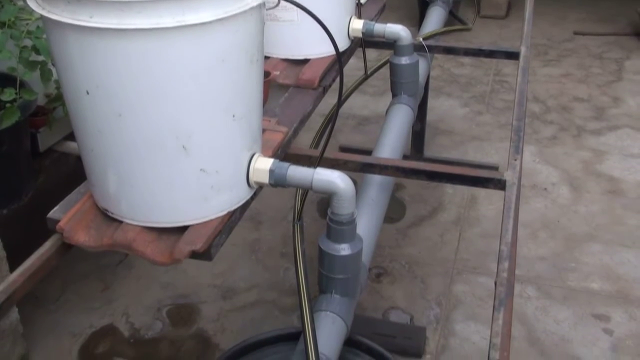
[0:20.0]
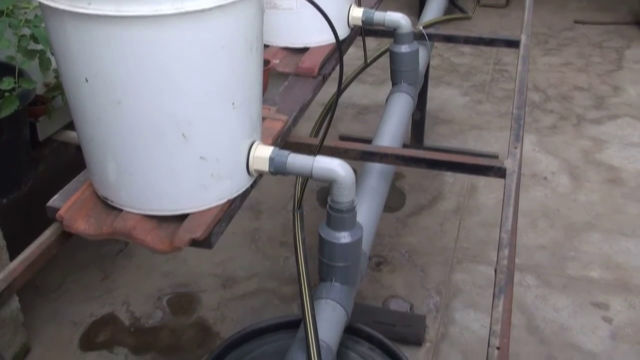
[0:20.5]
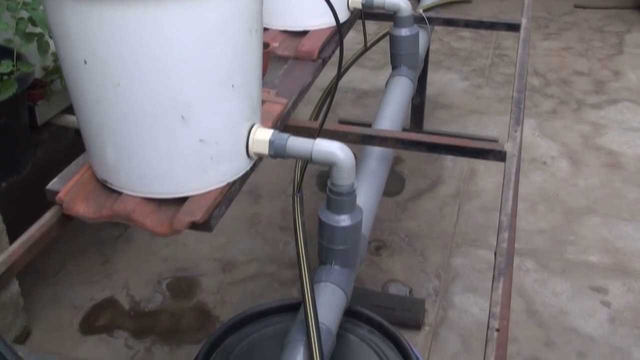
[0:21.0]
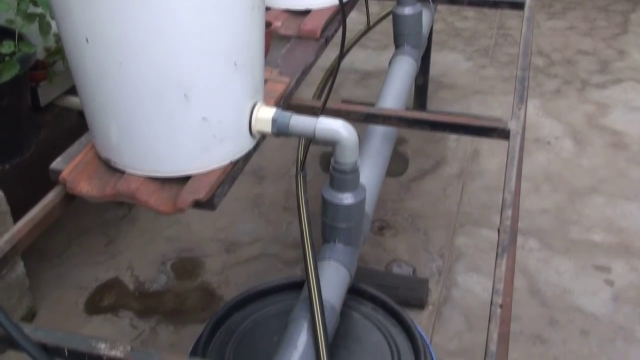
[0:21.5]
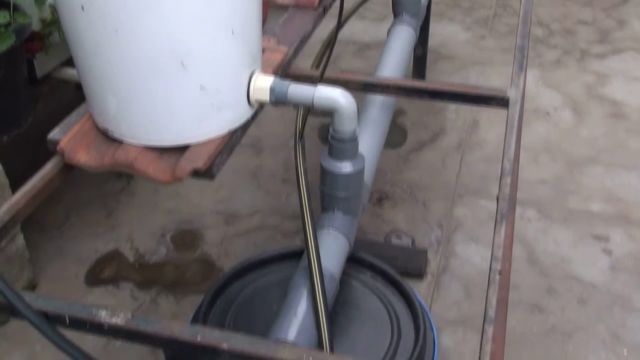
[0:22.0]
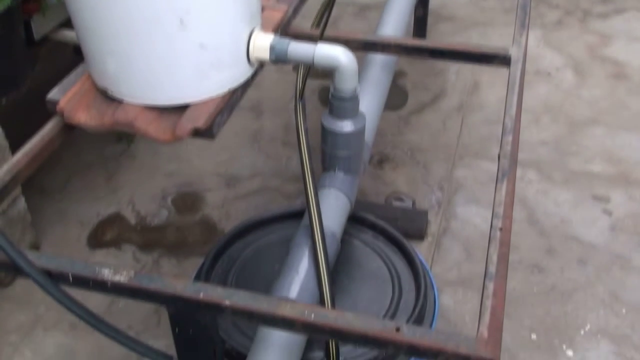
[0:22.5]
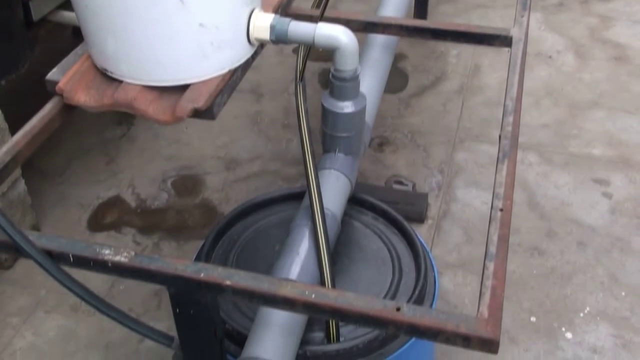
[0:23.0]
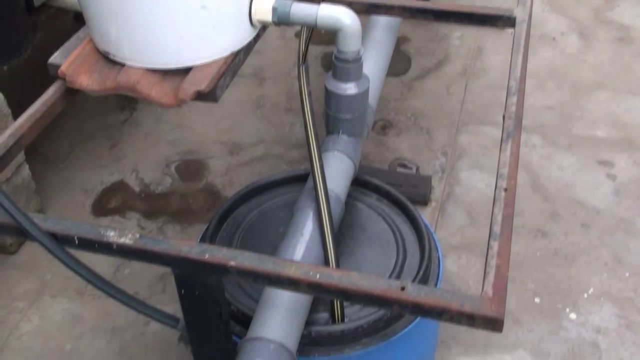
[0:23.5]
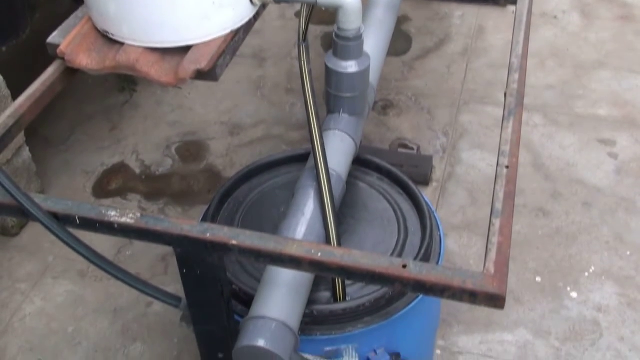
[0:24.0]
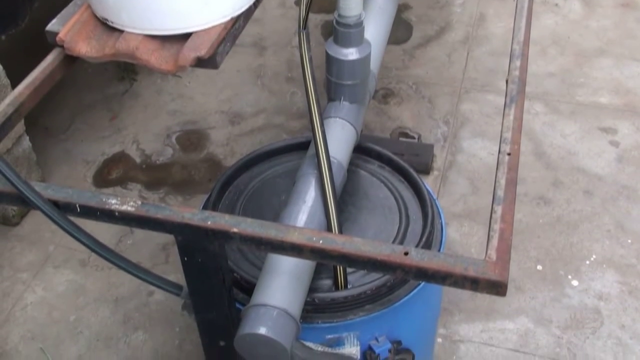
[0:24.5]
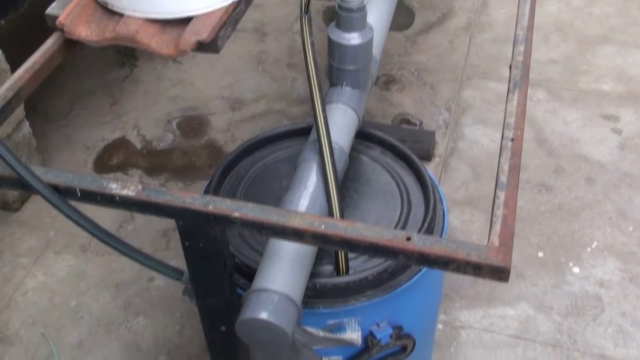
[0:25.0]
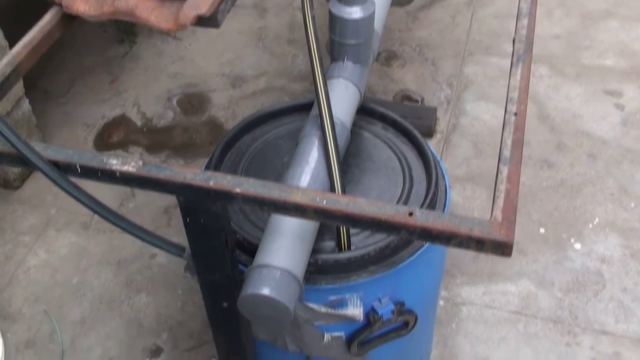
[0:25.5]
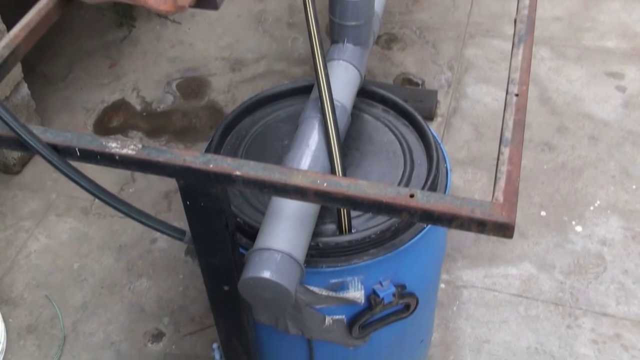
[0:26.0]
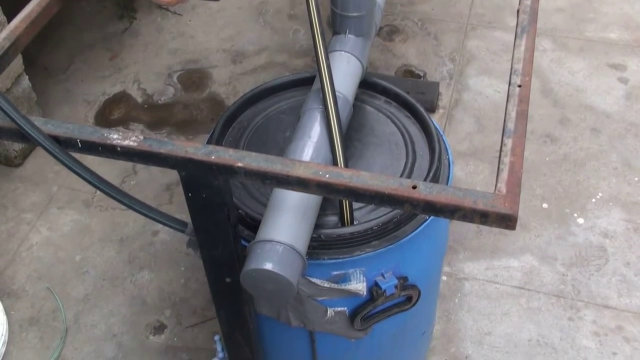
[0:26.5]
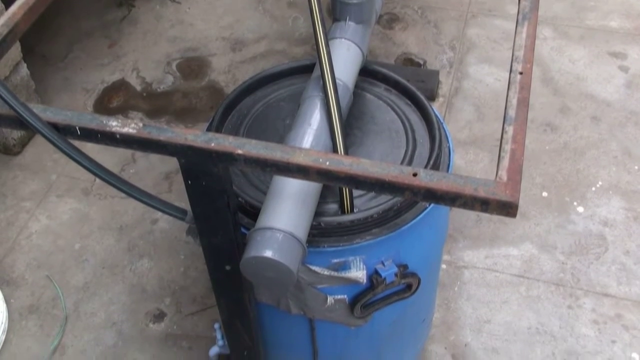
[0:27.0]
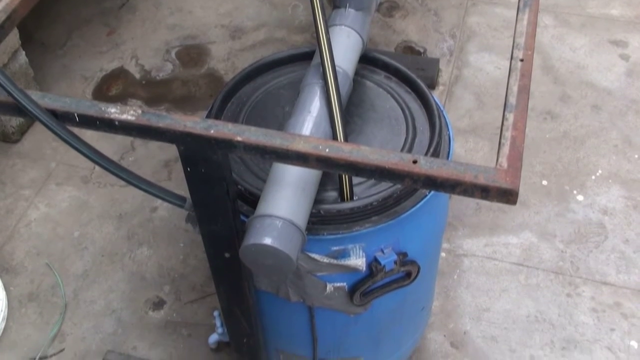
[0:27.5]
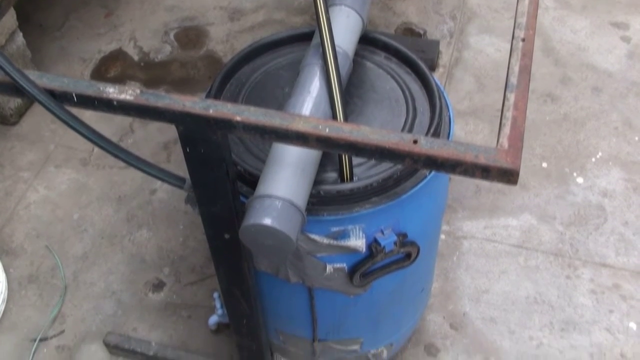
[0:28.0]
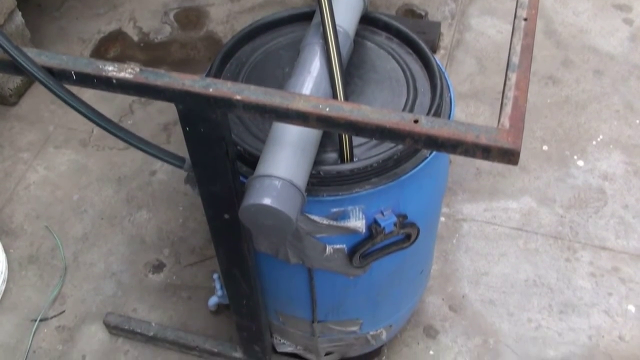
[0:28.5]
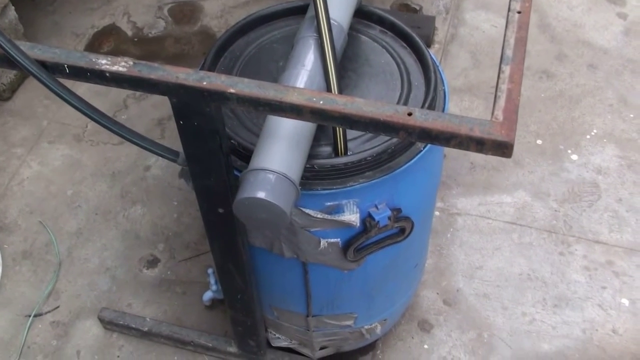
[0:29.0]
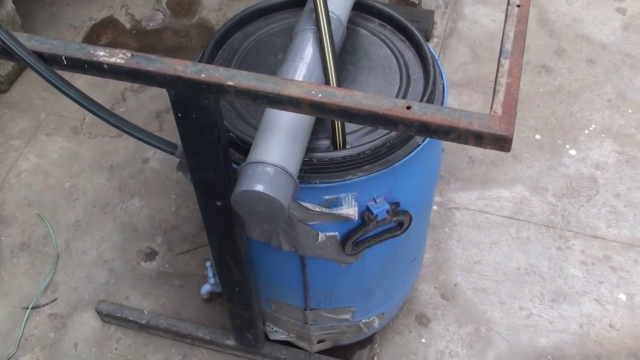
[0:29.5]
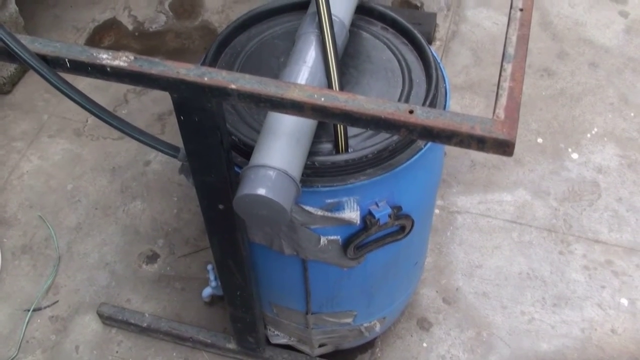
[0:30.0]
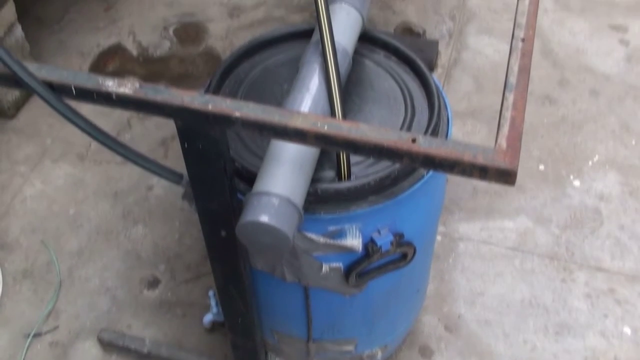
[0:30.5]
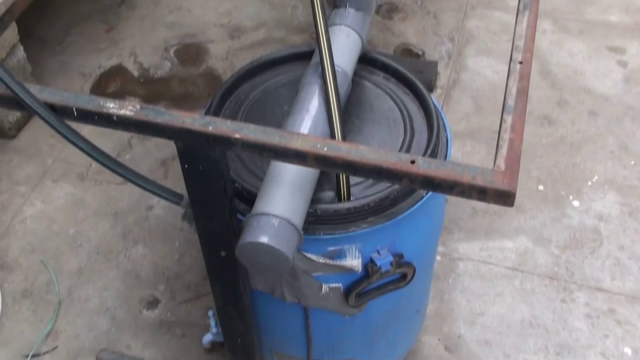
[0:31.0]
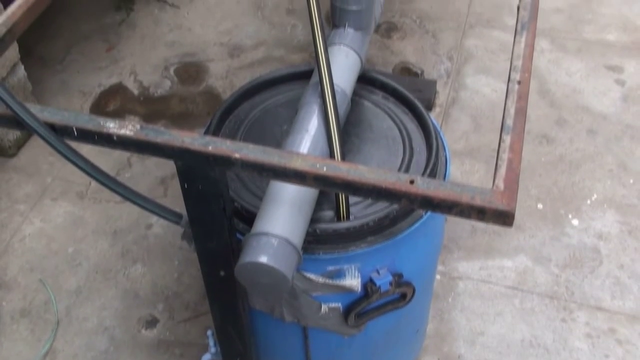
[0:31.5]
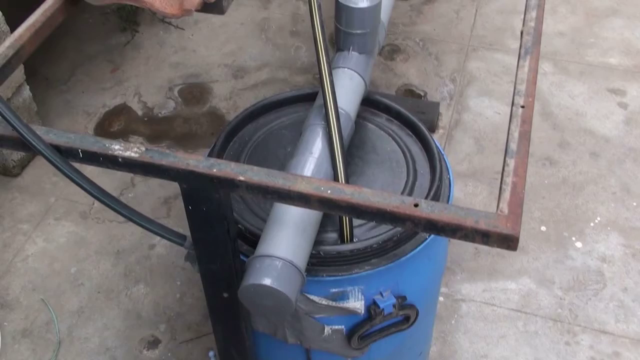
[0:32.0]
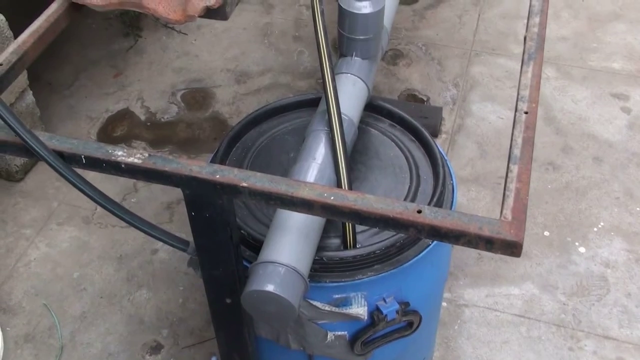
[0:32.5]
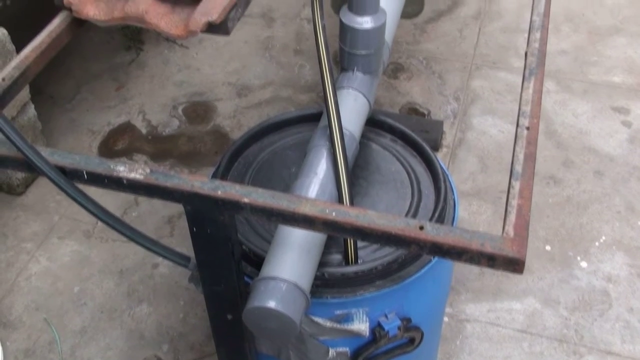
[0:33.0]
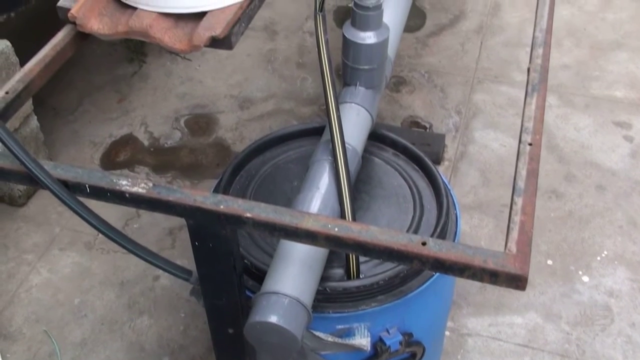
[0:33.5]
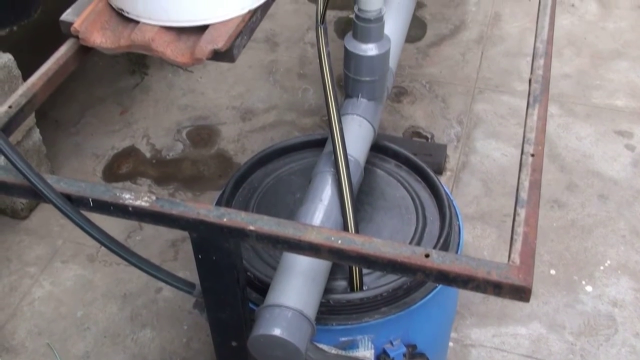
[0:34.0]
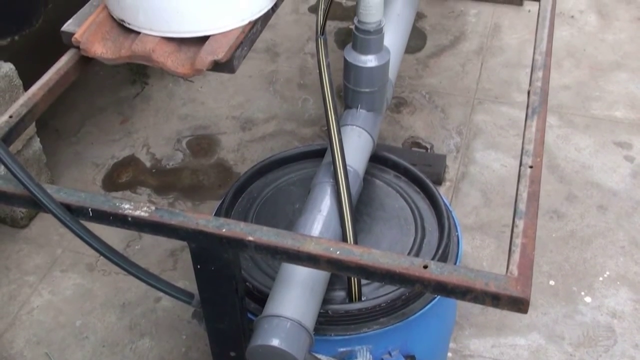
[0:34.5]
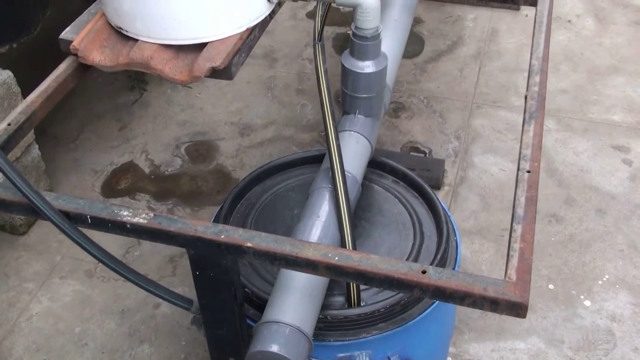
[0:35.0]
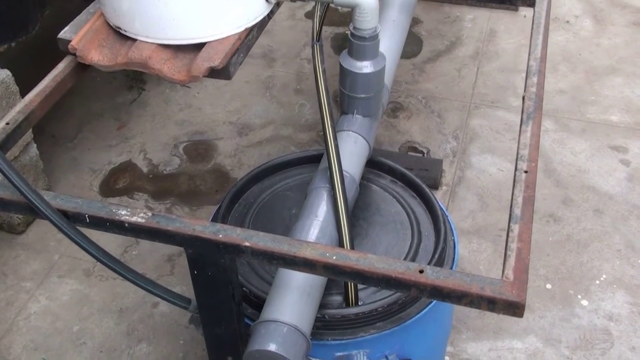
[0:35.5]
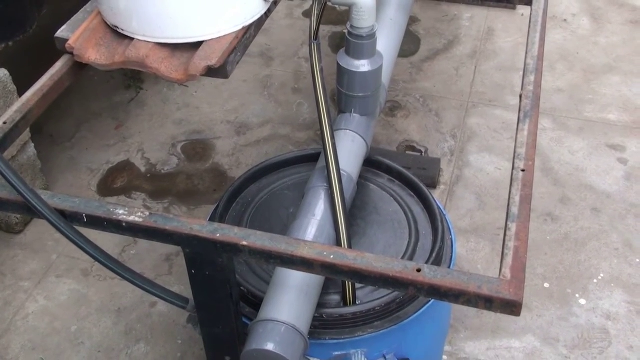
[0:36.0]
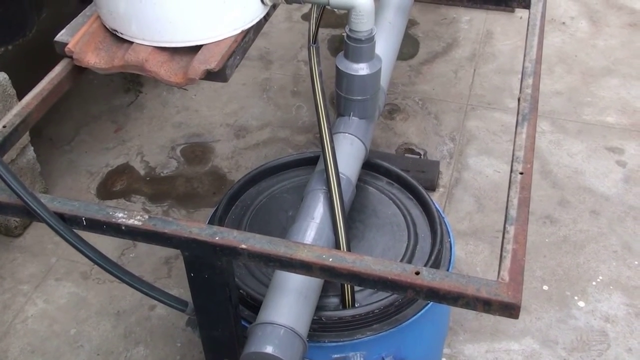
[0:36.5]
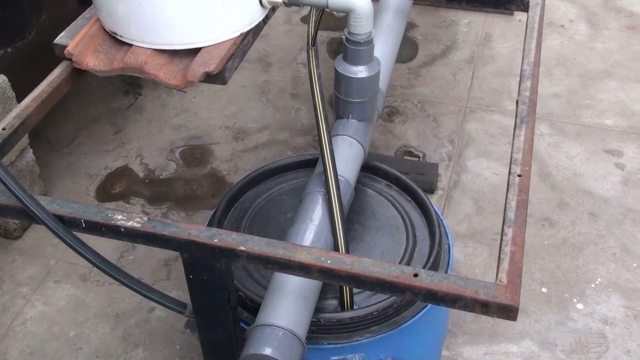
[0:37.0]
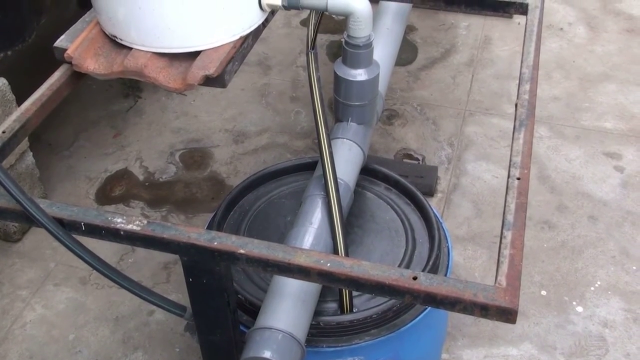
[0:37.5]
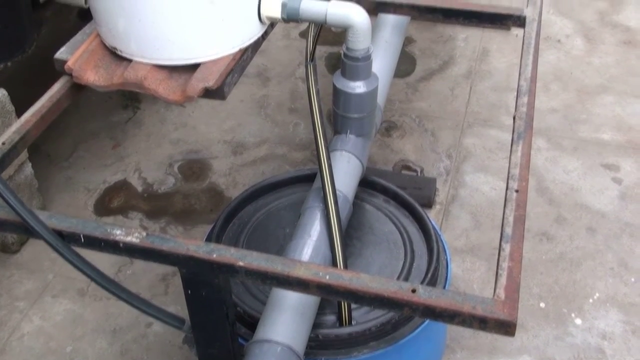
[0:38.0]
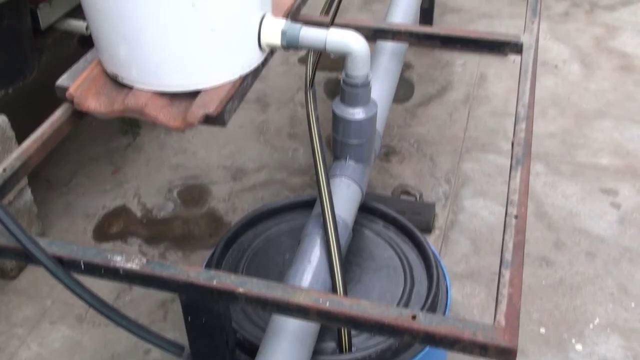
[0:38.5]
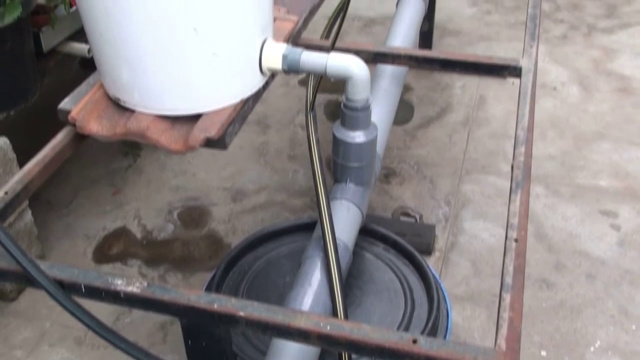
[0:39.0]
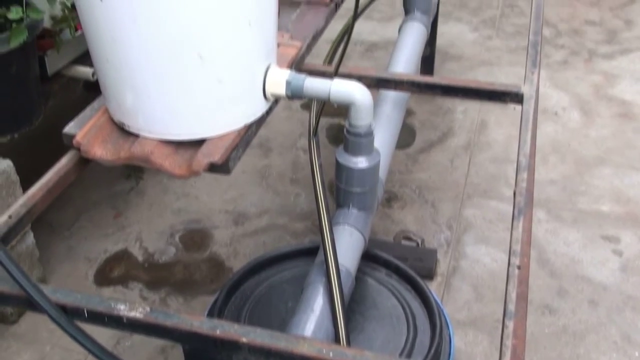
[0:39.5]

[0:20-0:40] The whole system is visible, showing where the pipes go. The steel reinforcement where the buckets sit on top is visible. Below is another bucket, blue with a black top. The camera follows around, moving up and down, showing the whole layout, and ends on the blue bucket and the pipes connecting back and forth. There are gray pipes and smaller black pipes, all connected and going around in circles. The layout of the place stays the same.